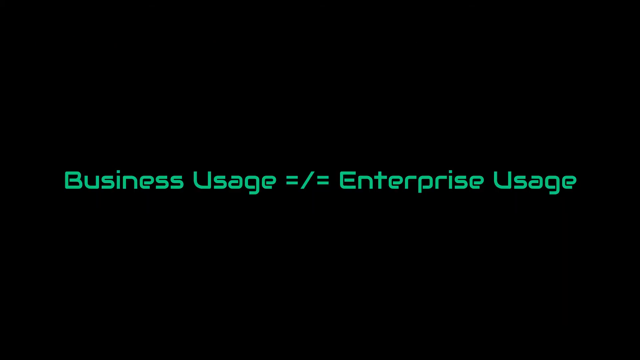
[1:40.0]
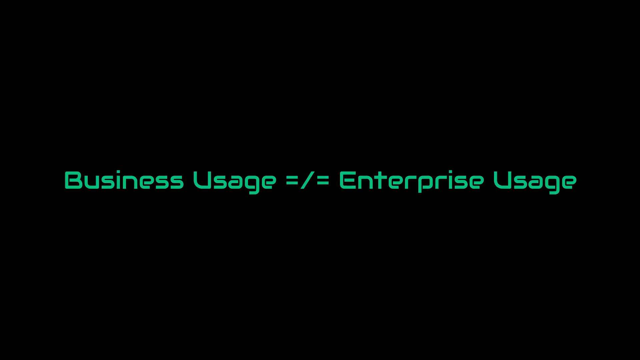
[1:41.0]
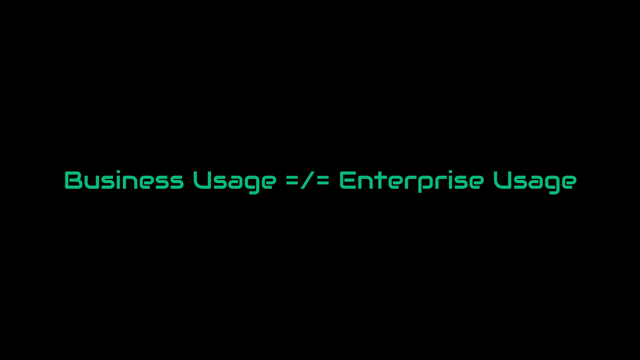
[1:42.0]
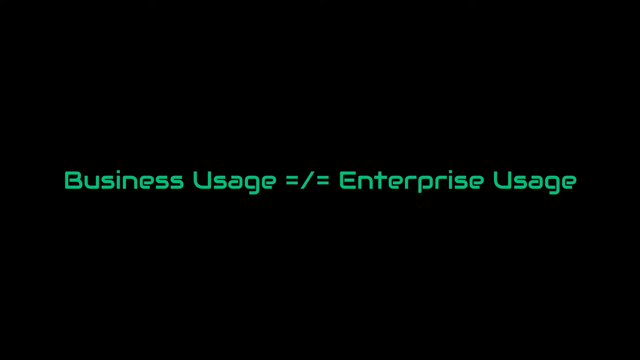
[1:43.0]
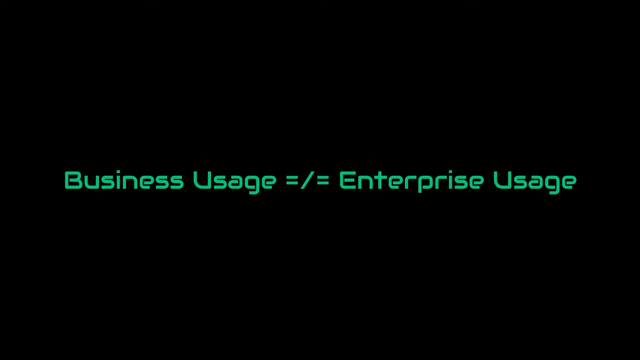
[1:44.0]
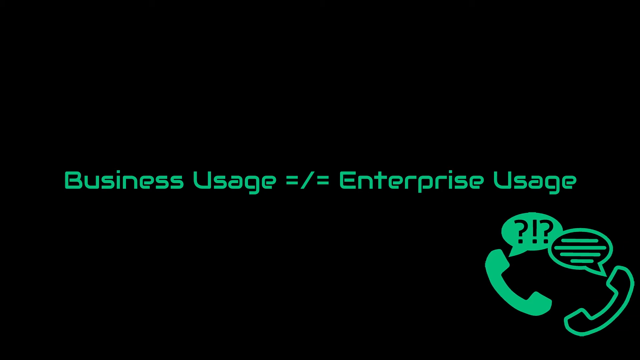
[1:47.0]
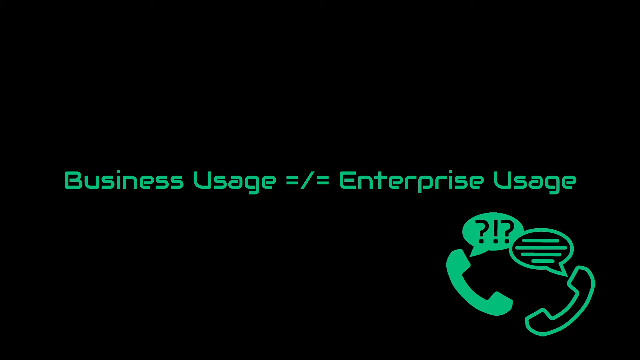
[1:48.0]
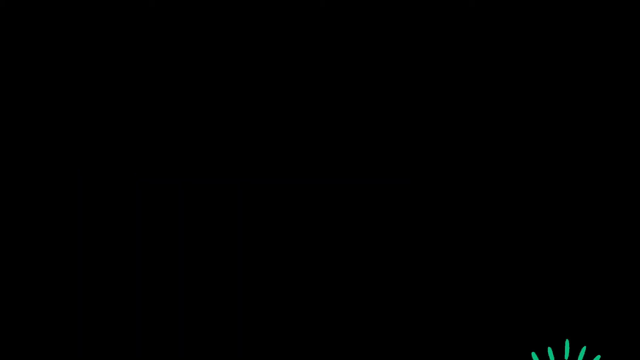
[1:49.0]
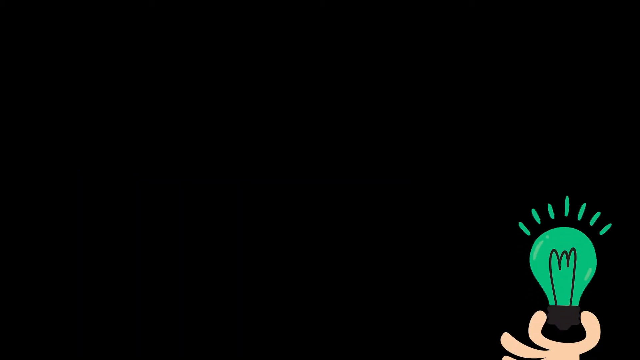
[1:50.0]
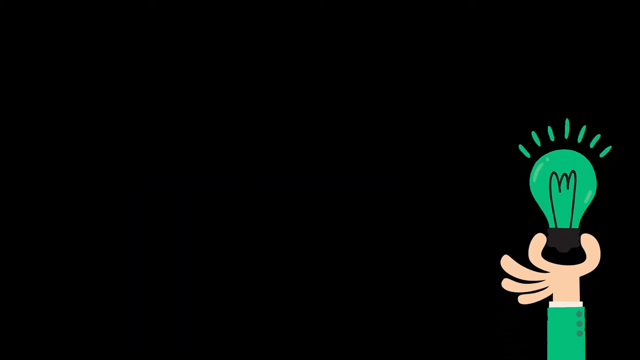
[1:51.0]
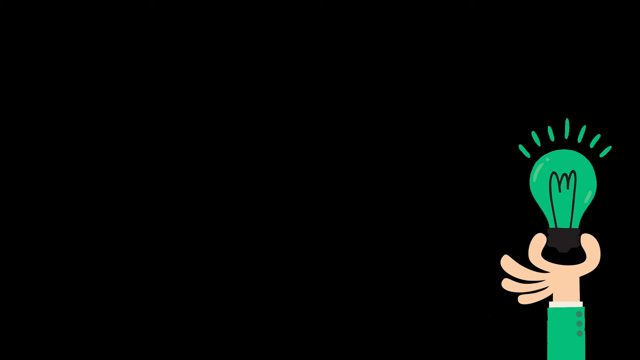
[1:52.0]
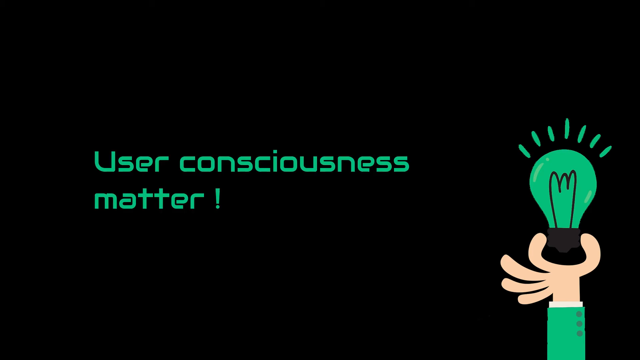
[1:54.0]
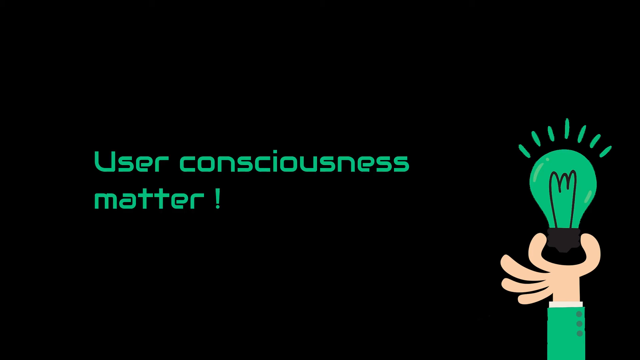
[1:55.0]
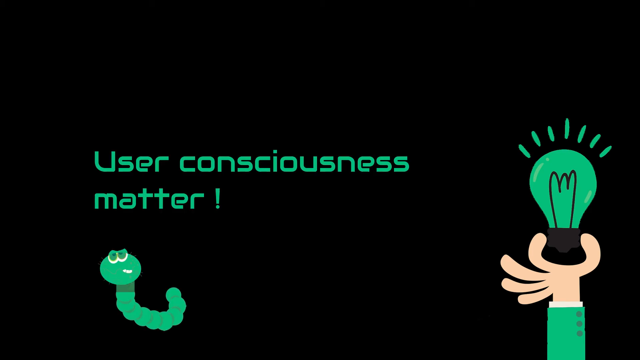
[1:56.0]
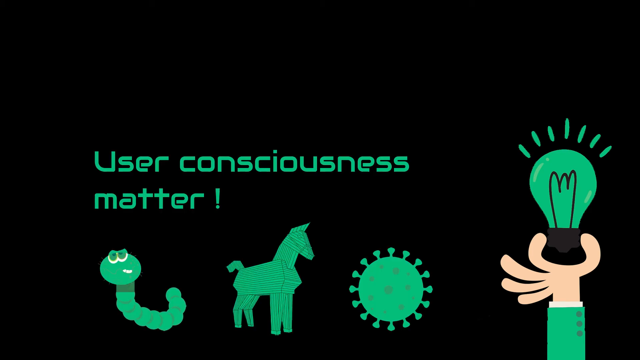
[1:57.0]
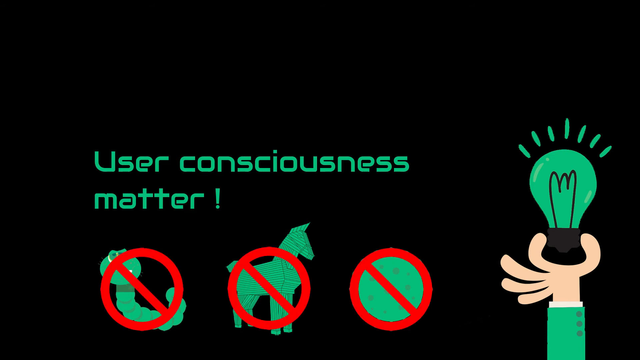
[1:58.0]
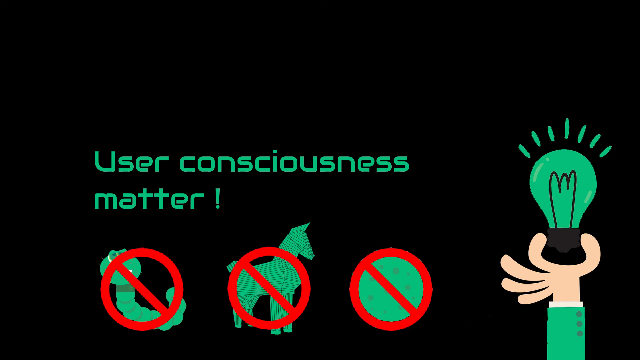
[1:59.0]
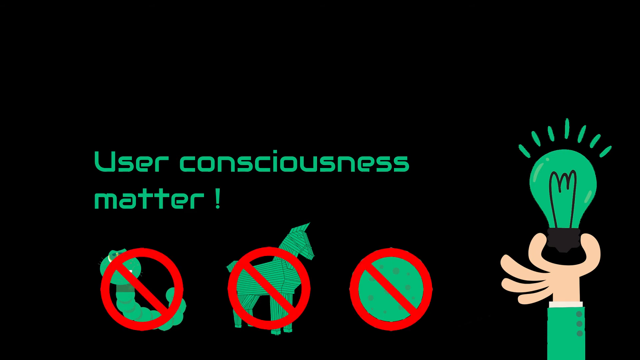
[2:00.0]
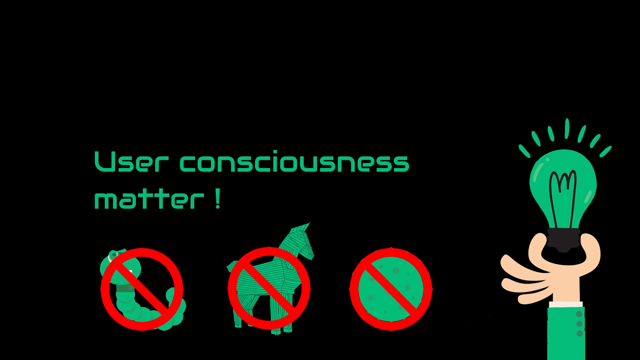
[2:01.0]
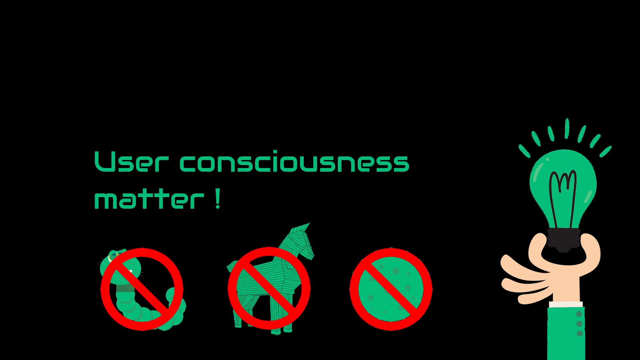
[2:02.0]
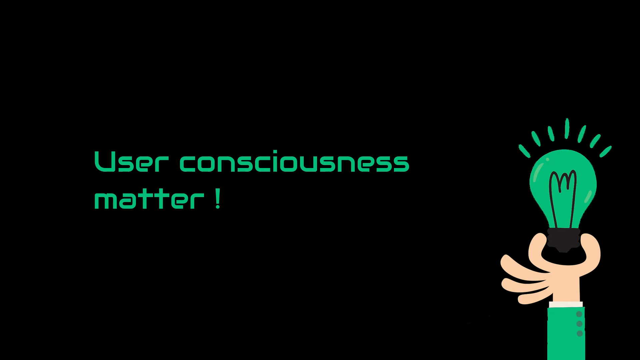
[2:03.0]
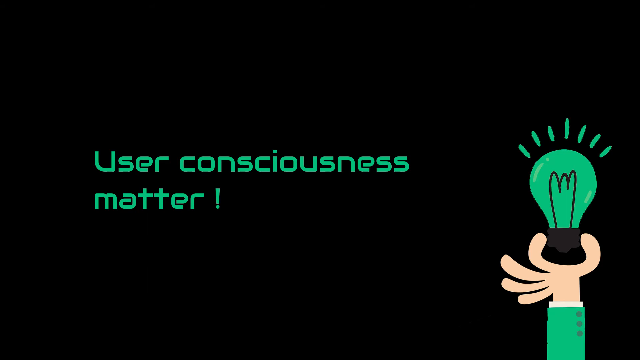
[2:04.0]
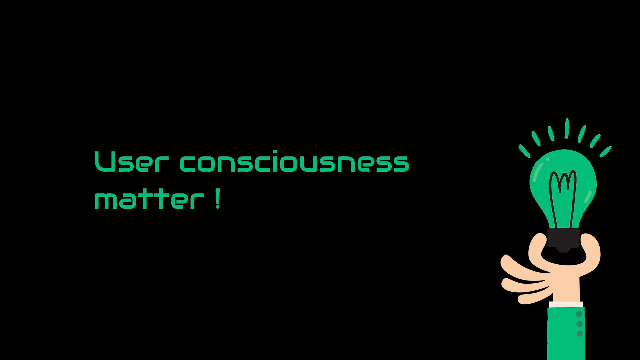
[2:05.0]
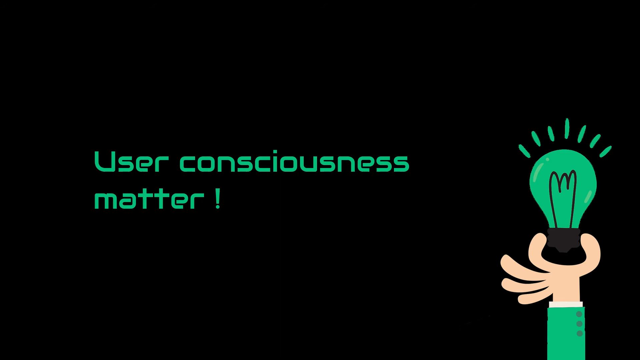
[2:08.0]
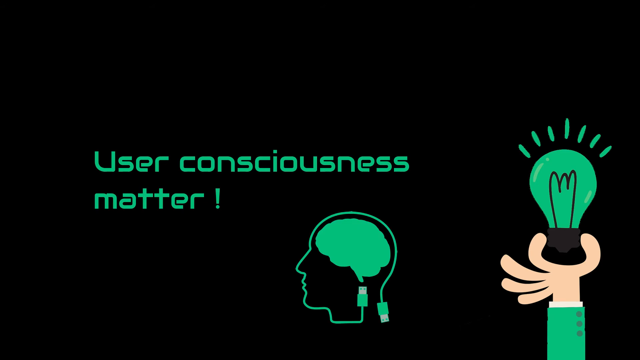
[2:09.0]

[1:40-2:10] Text on screen reads "business usage does not equal enterprise usage", with "does not equal" shown as two equal signs separated by a slash. The text stays on screen for a while, about seven seconds, and then two phones come in from the right side of the screen, one on the left and one on the right. The left one appears to be a clip-art phone with a speech bubble containing a question mark, an exclamation point and another question mark. The other phone is outlined in the same green color and is black inside, with a text bubble showing four horizontal lines. Next a hand, possibly left or right, comes up on screen with a green buttoned sleeve and a white undershirt, holding up a light bulb that glows green. Text then appears reading "user consciousness matter", and a worm, a Trojan horse and a virus show up beneath it. A red no sign, a circle with a diagonal slash, pops up, and all three vanish along with their symbols. An outline of a head made from a USB cord appears, with a cross section of a brain inside it.